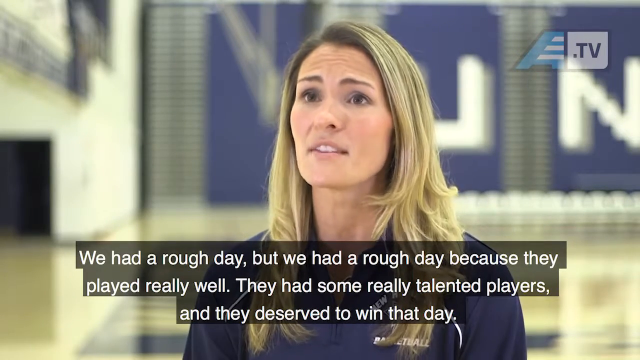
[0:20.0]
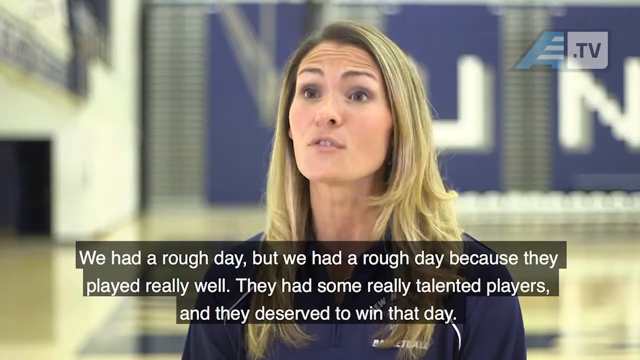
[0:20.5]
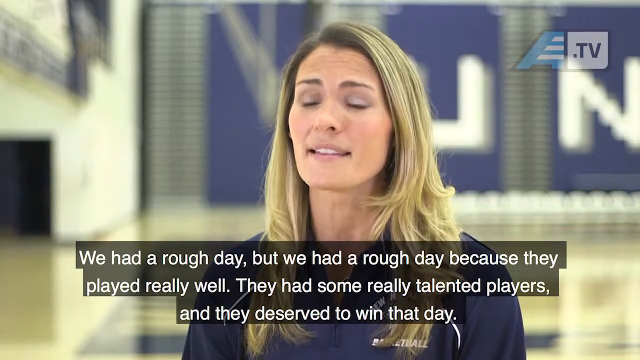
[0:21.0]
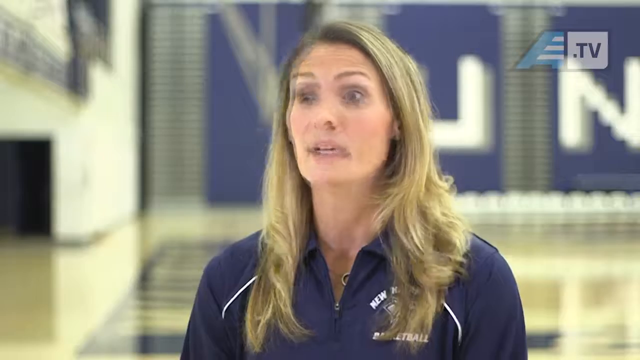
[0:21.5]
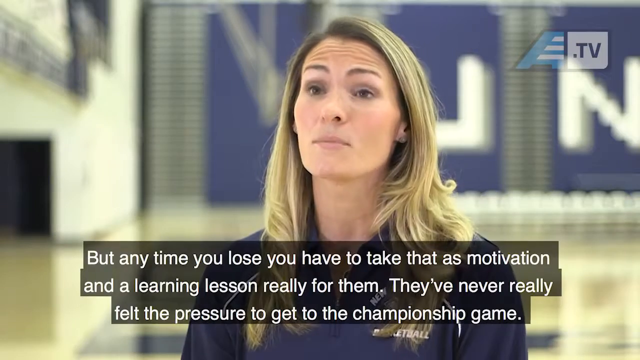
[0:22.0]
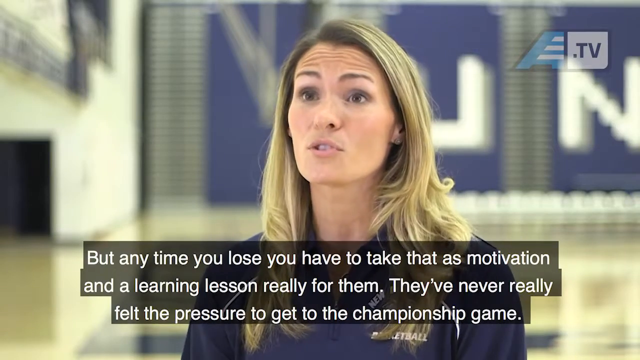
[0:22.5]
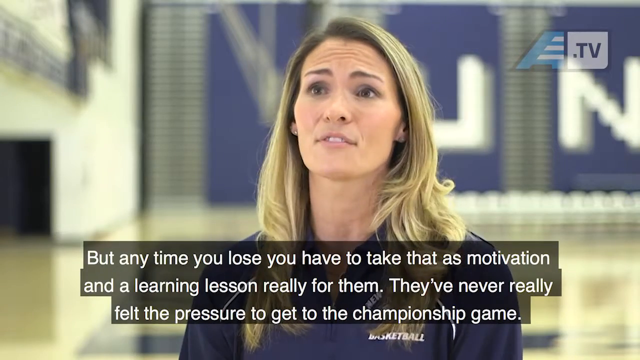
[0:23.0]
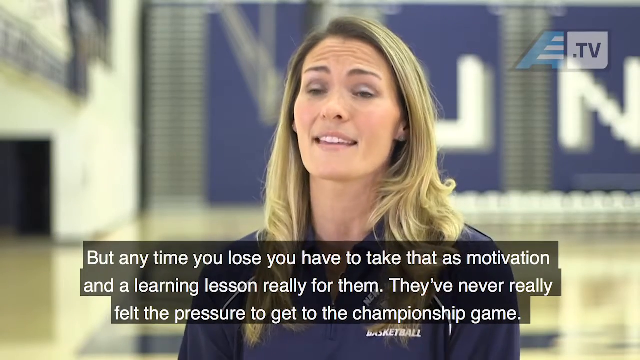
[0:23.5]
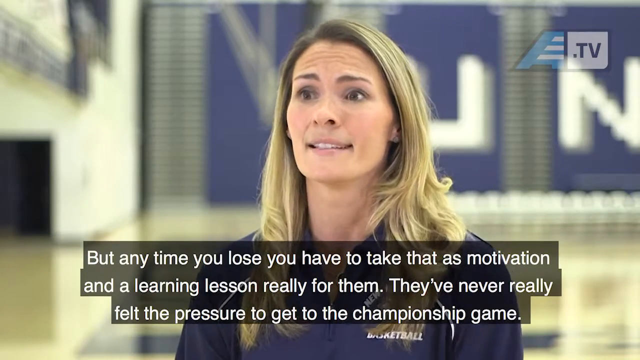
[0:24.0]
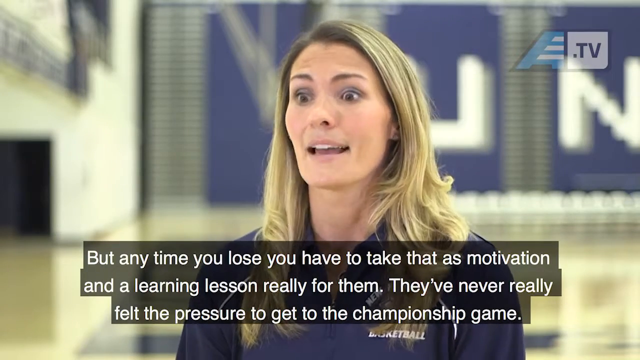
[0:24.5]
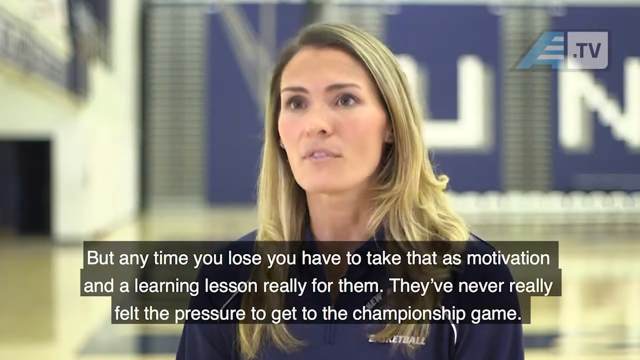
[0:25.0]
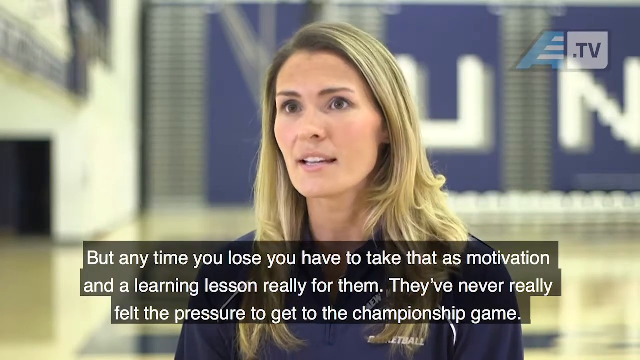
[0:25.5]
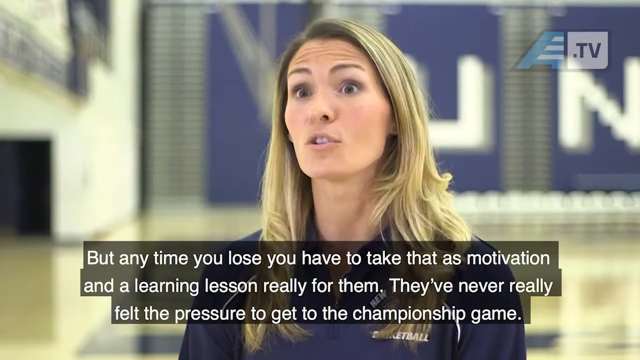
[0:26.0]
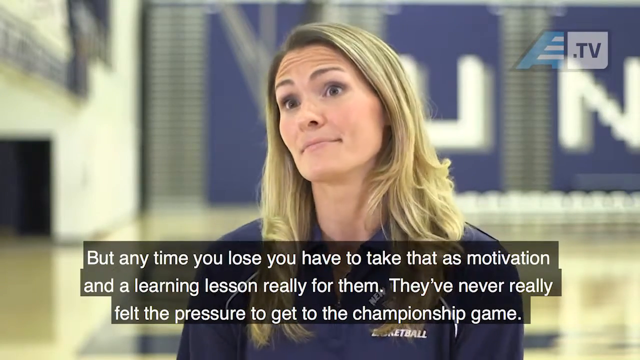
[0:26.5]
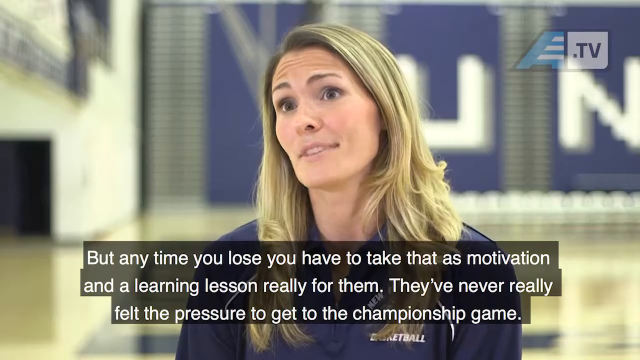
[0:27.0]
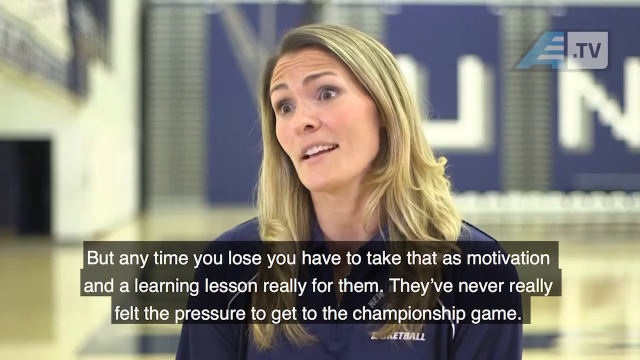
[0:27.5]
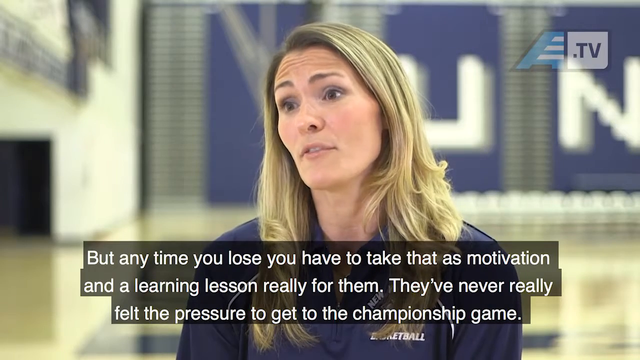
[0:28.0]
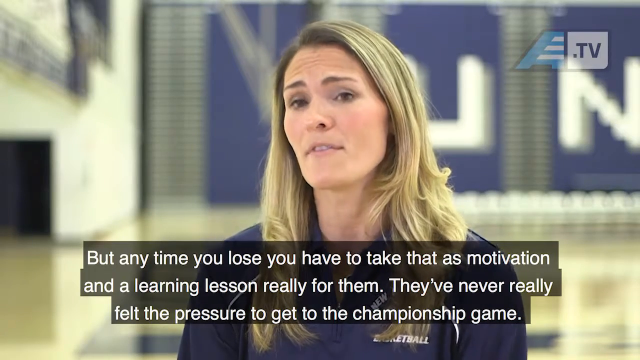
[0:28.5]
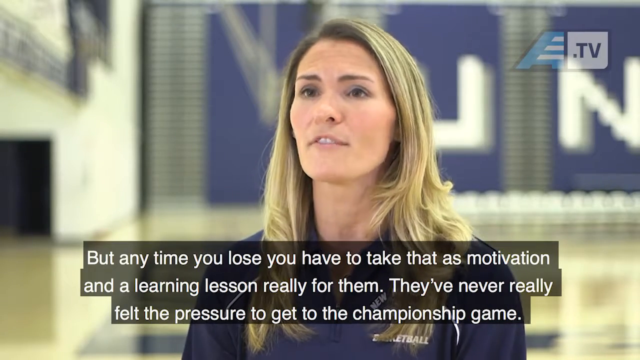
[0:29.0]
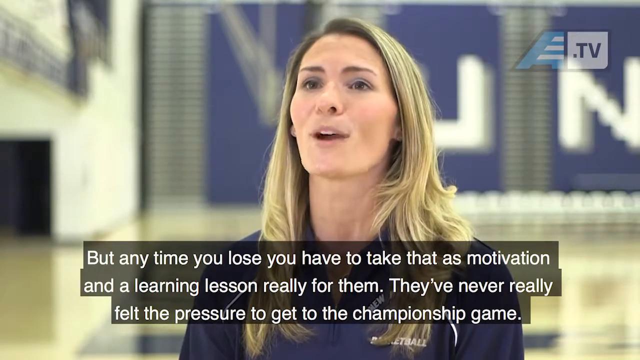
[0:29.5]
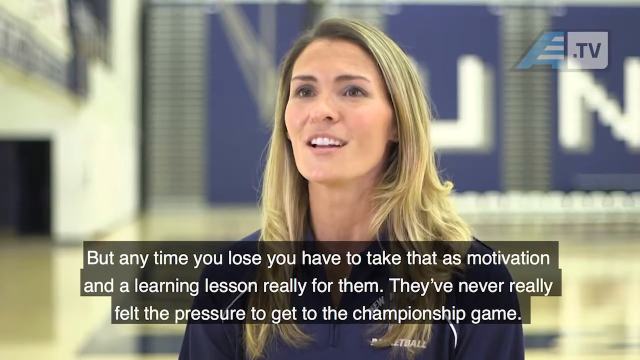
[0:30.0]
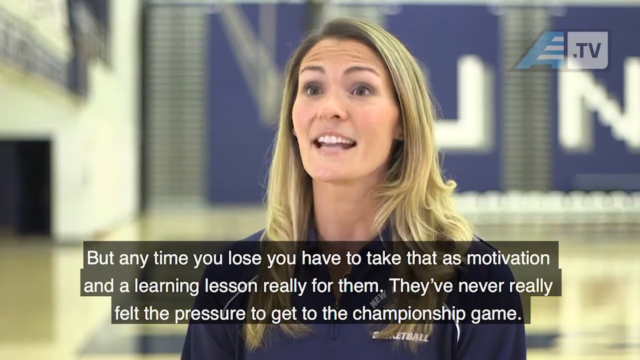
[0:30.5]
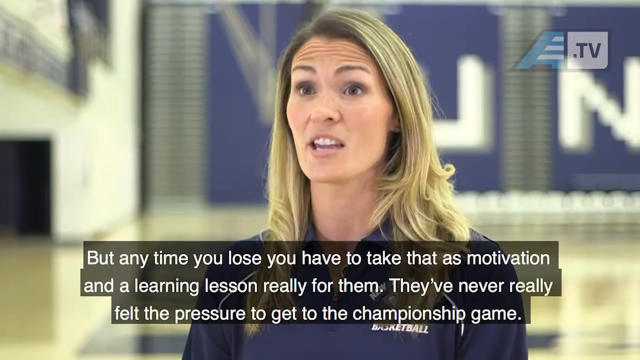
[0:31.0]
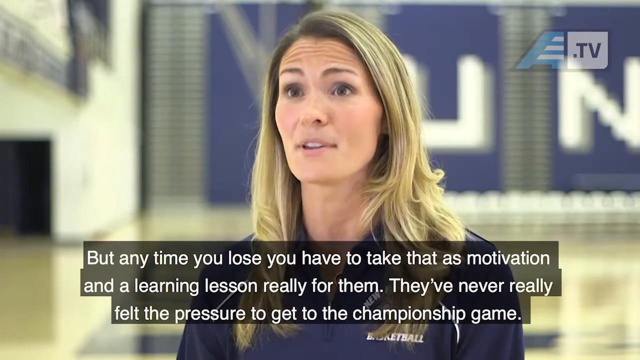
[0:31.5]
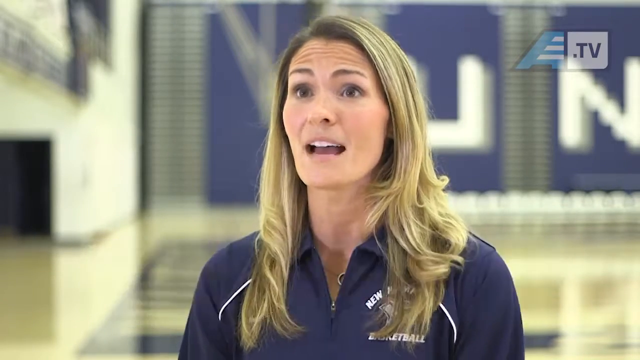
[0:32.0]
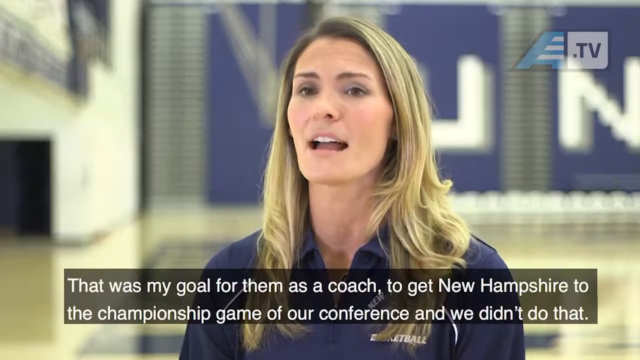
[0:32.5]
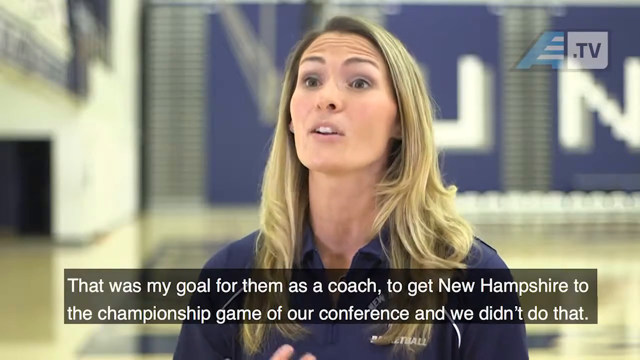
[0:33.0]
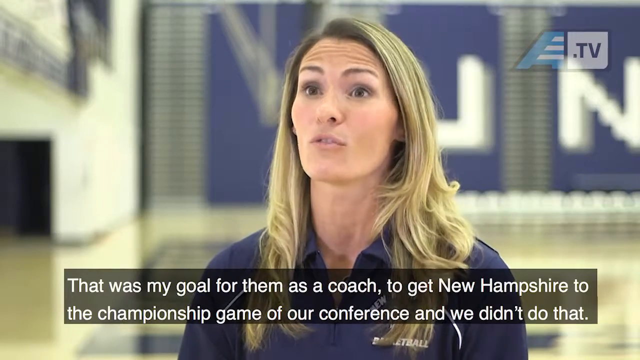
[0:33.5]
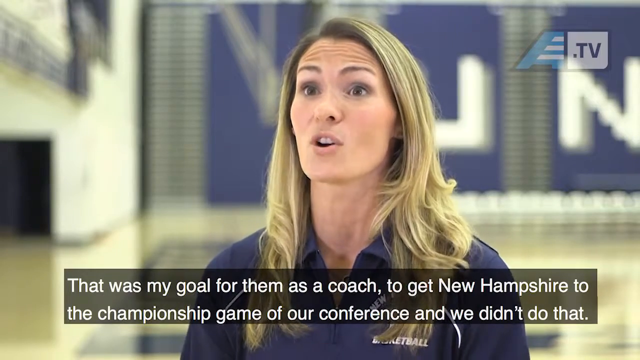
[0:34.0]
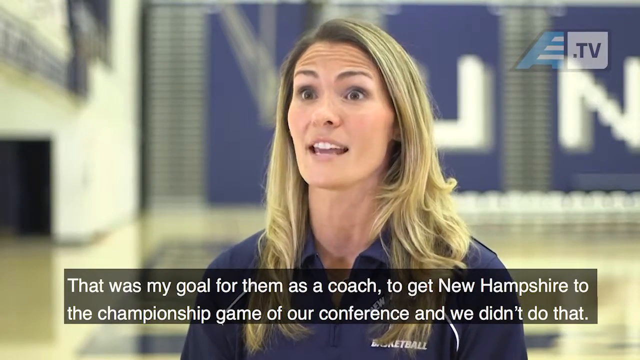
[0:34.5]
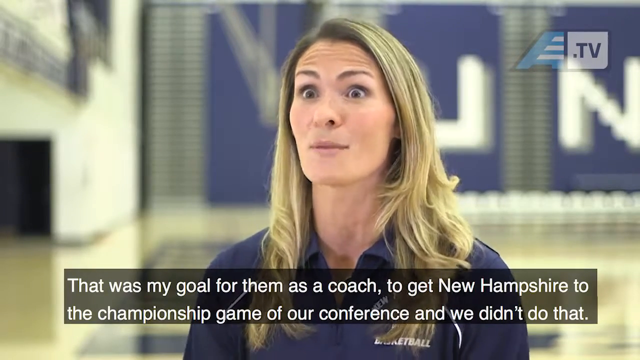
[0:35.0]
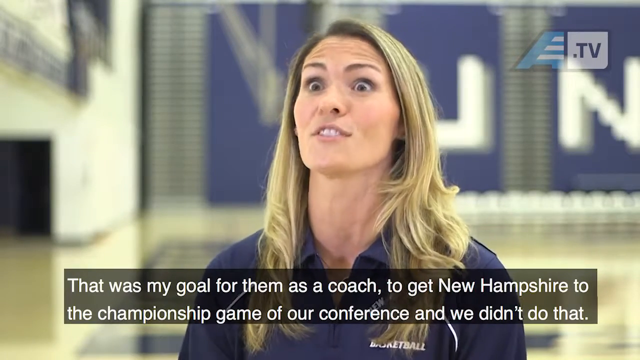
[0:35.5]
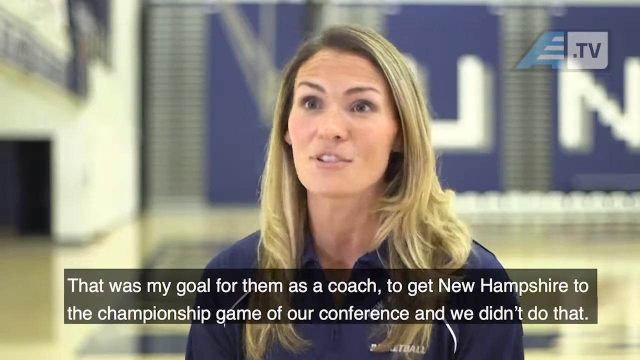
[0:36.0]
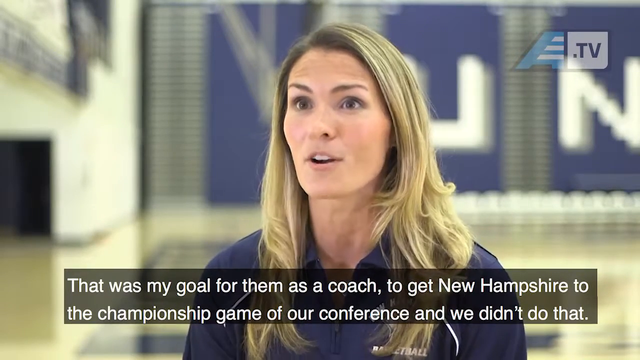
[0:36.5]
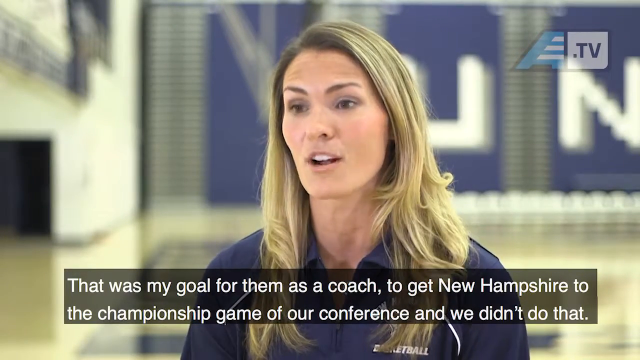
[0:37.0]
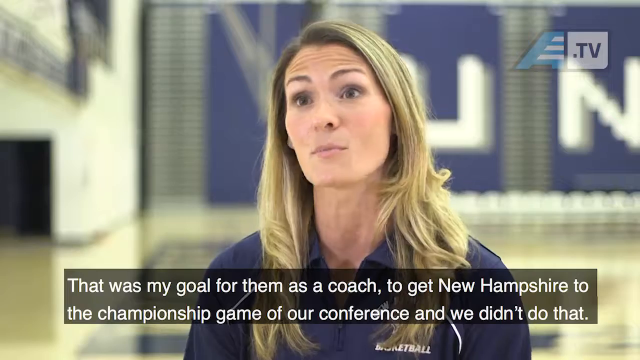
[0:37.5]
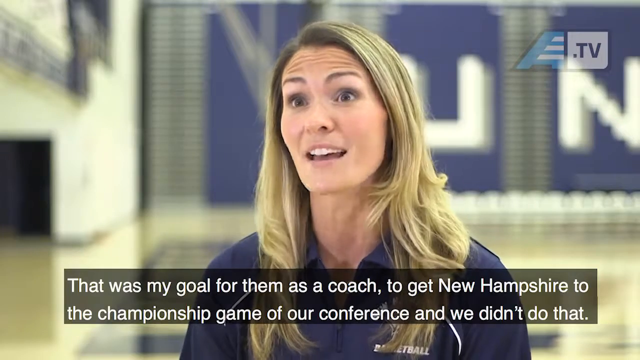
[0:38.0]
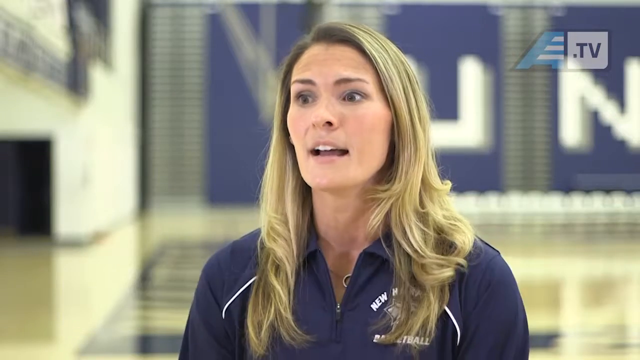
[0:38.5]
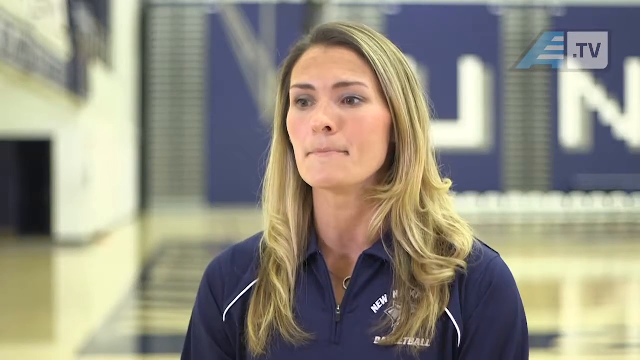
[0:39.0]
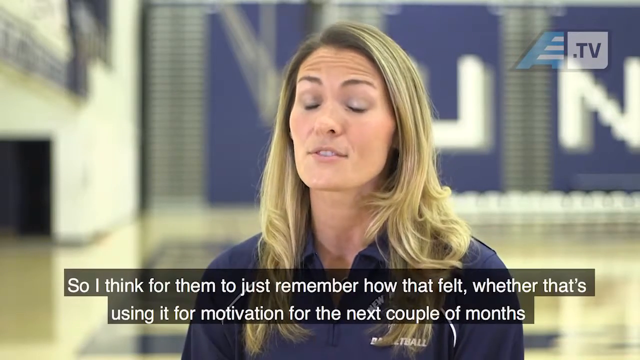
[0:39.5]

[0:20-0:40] What appears to be an interview shows a woman with dirty blonde hair wearing a blue shirt with a collar, which is unzipped, and a logo on the left side of her chest. She appears to be standing in a gym, with banners that say U and N behind her. Subtitles overlaid in the foreground read "We had a rough day, but we had a rough day because they played really well. They had some really talented players and they deserved to win that day." The channel logo, with an A and ".TV", is in the top right of the video. The interview quickly cuts to her next sentence, overlaid as subtitles: "but any time you lose, you have to take that as motivation and a learning lesson really for them, they've never really felt the pressure to get to the championship game."